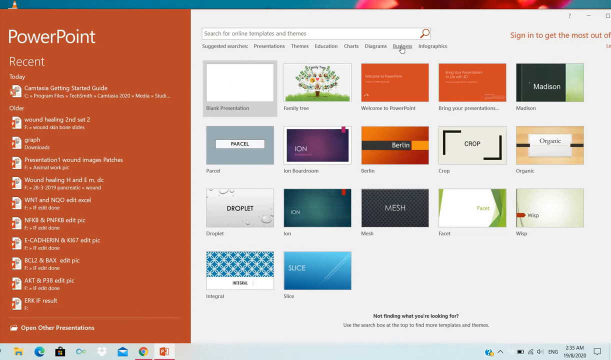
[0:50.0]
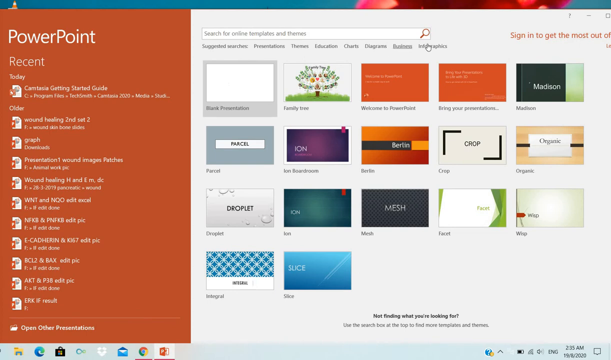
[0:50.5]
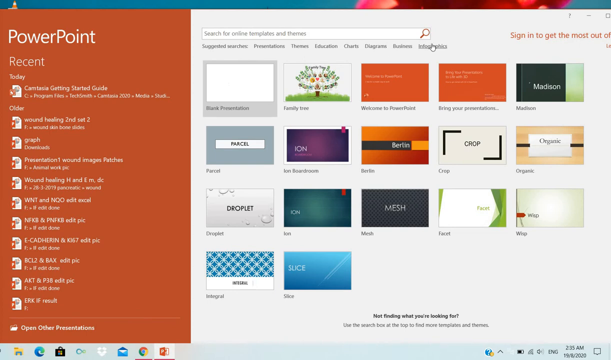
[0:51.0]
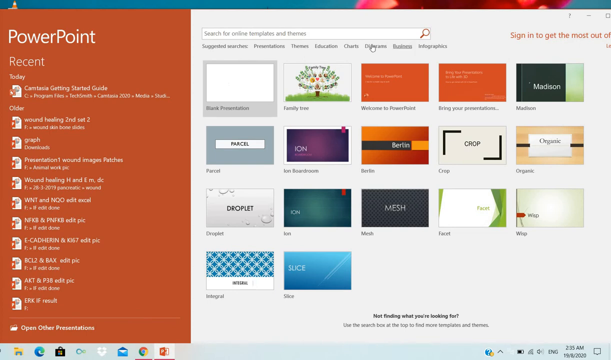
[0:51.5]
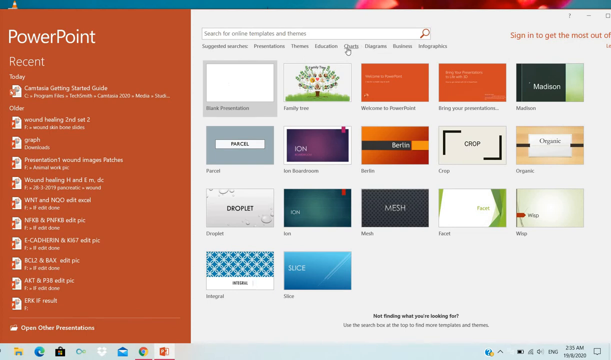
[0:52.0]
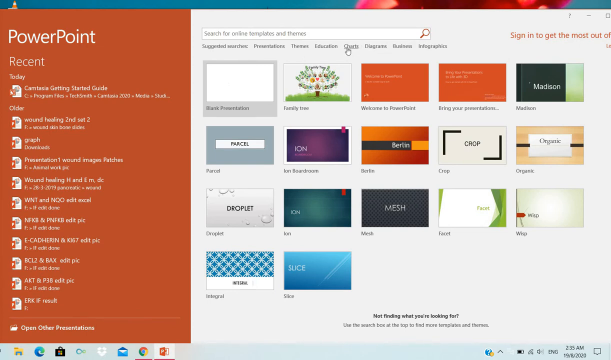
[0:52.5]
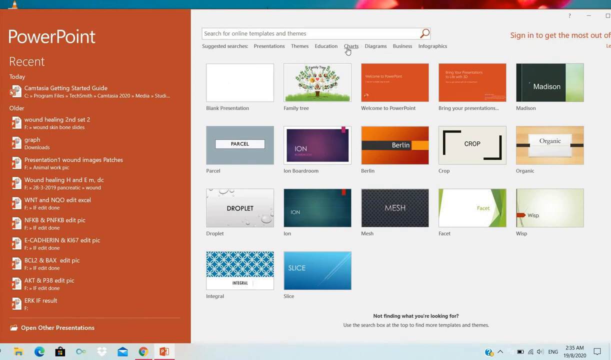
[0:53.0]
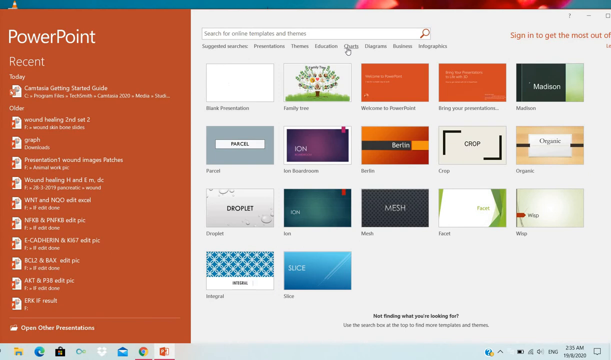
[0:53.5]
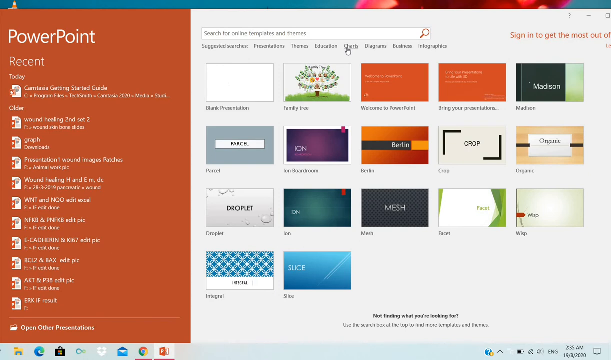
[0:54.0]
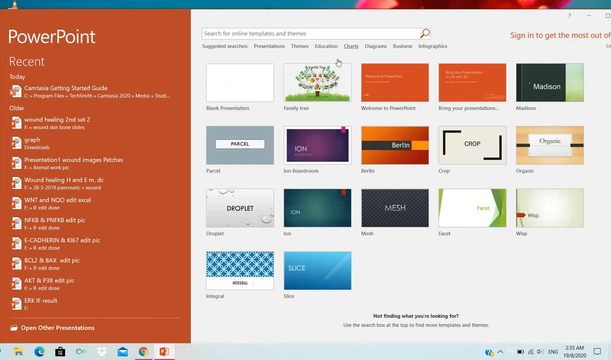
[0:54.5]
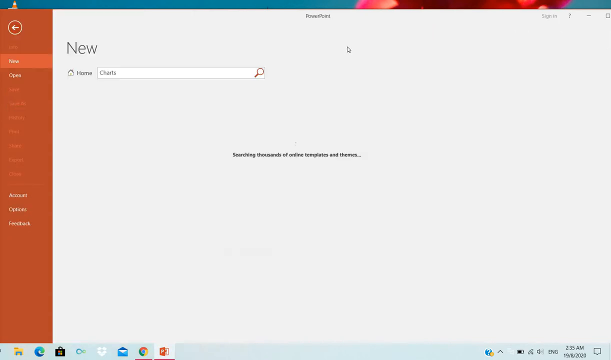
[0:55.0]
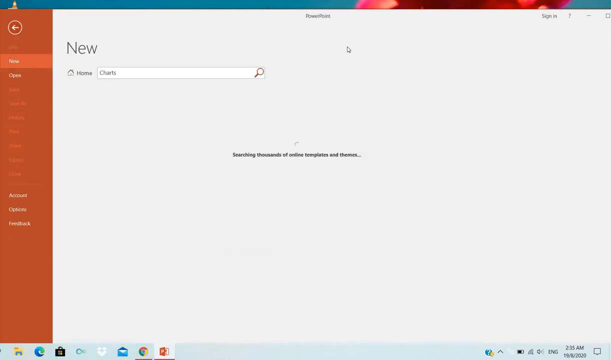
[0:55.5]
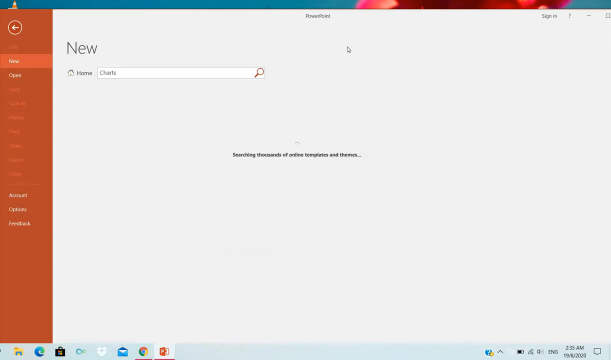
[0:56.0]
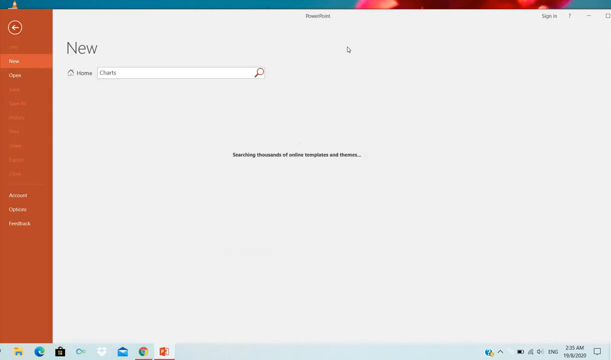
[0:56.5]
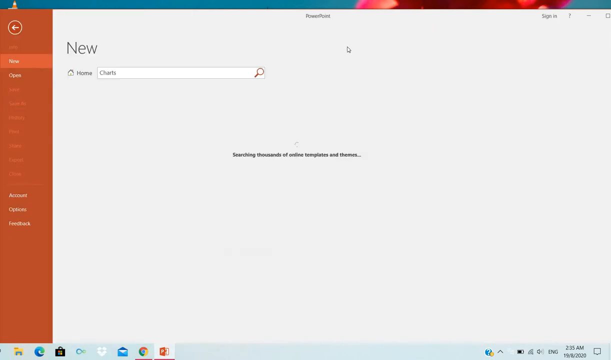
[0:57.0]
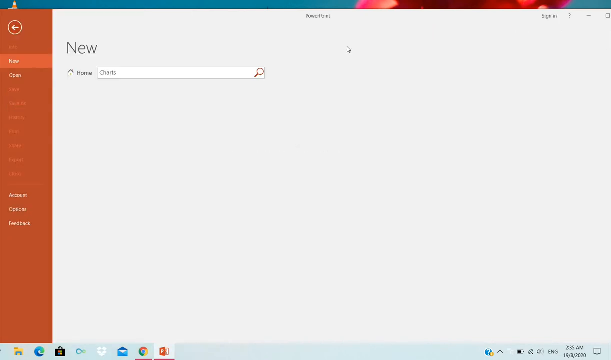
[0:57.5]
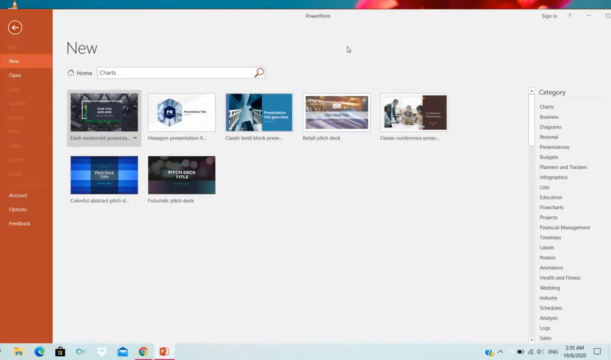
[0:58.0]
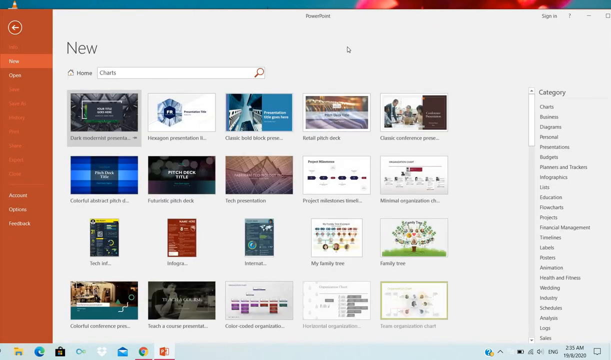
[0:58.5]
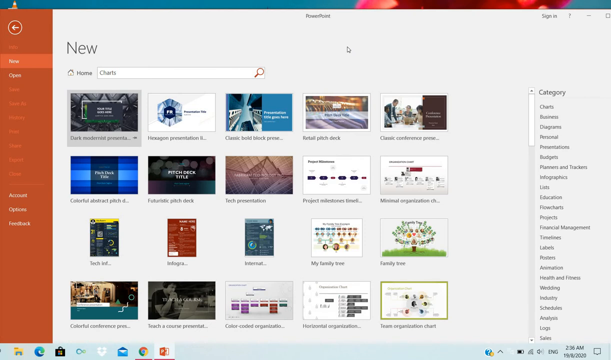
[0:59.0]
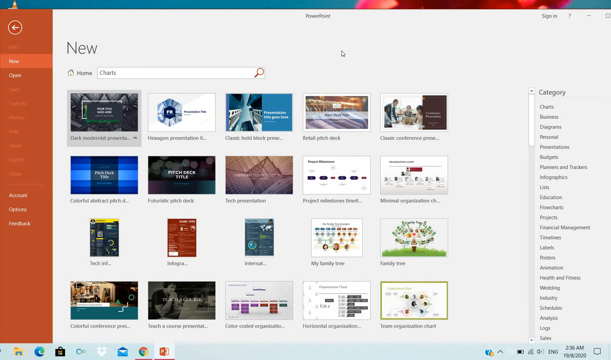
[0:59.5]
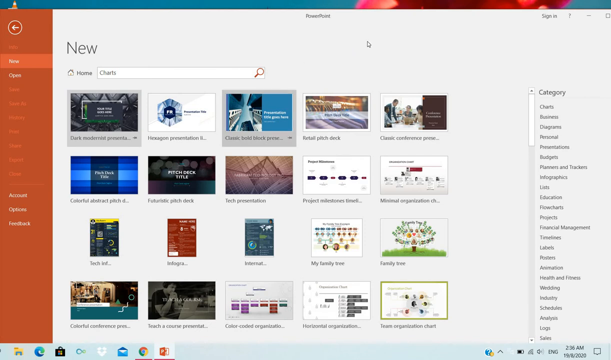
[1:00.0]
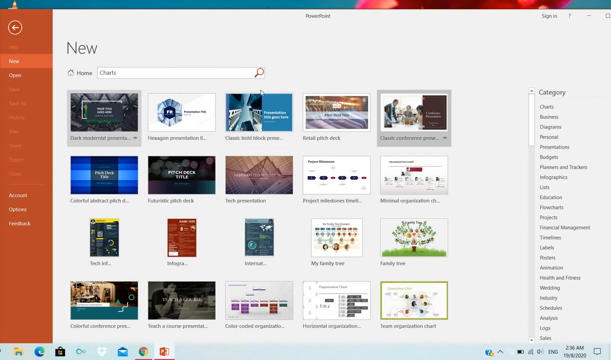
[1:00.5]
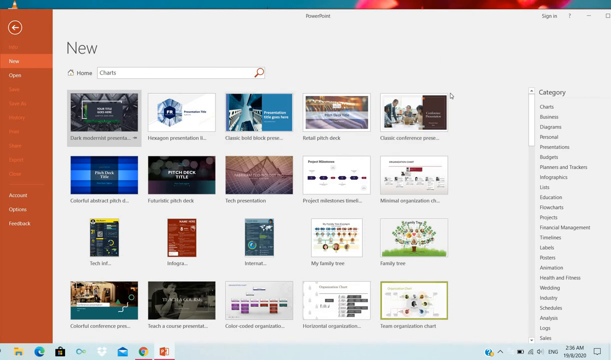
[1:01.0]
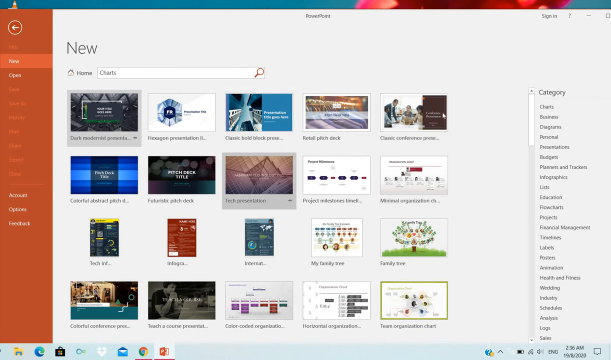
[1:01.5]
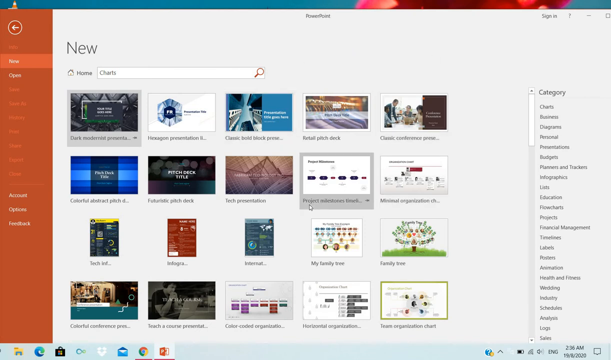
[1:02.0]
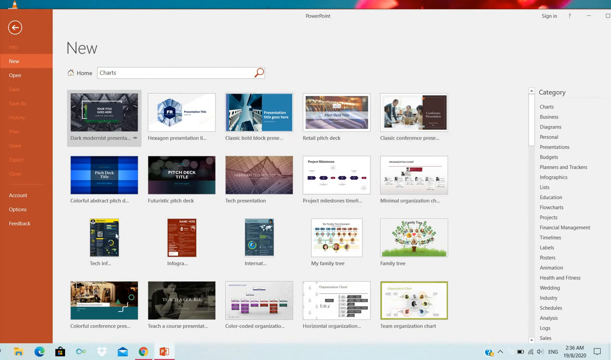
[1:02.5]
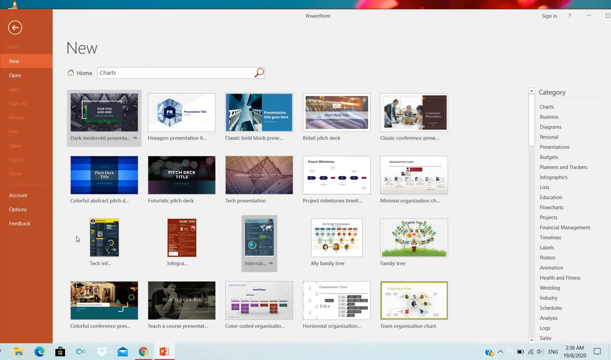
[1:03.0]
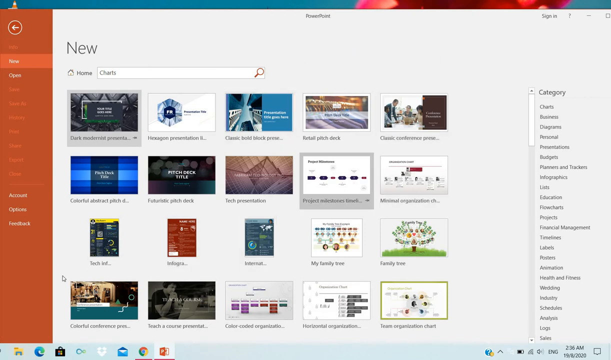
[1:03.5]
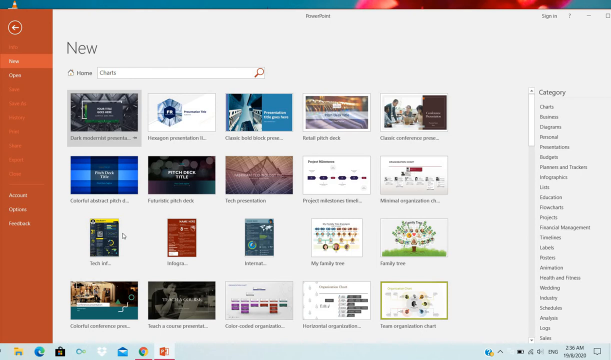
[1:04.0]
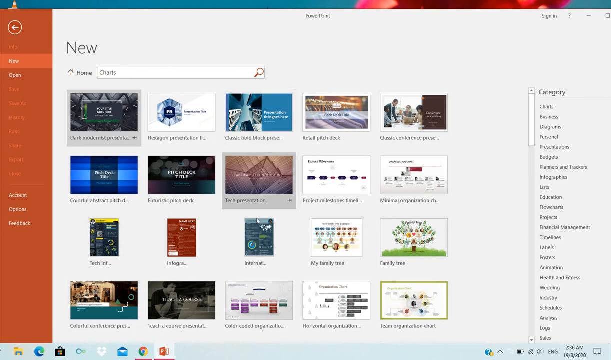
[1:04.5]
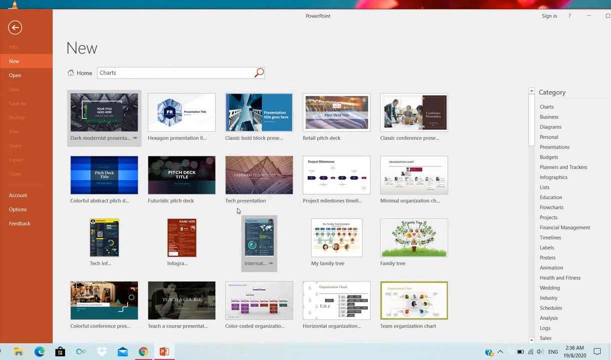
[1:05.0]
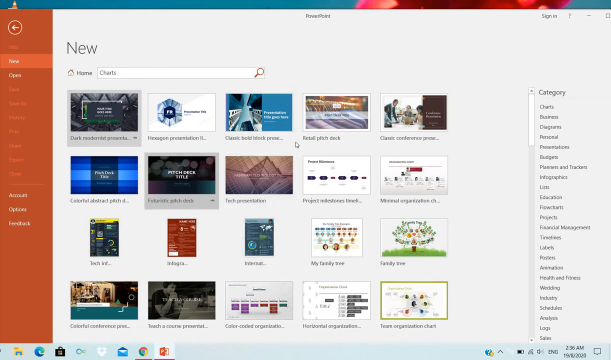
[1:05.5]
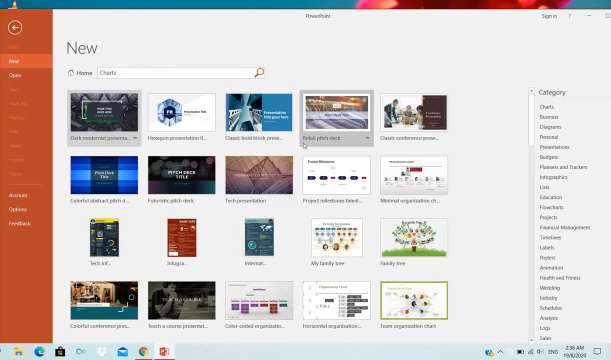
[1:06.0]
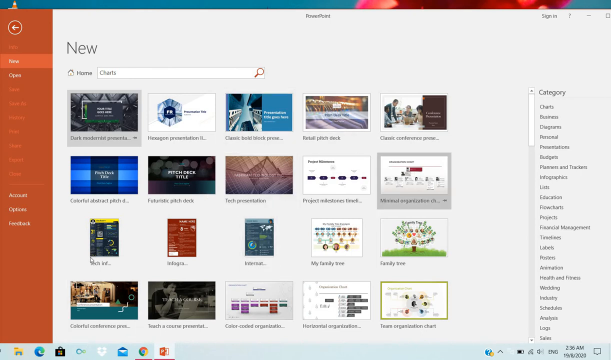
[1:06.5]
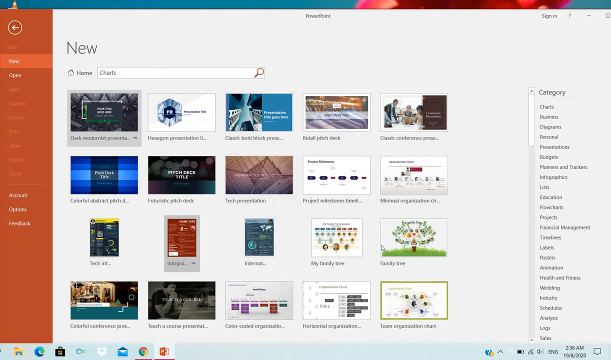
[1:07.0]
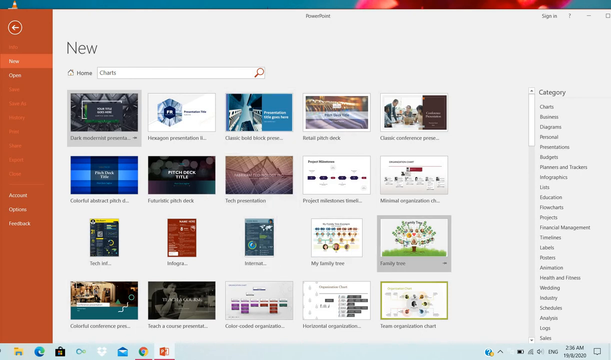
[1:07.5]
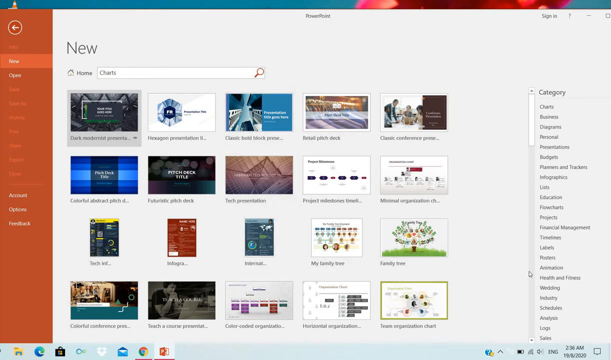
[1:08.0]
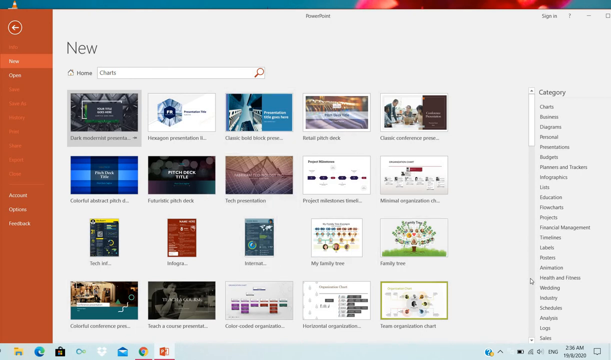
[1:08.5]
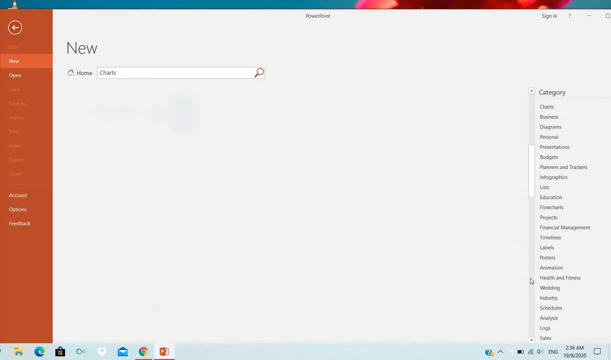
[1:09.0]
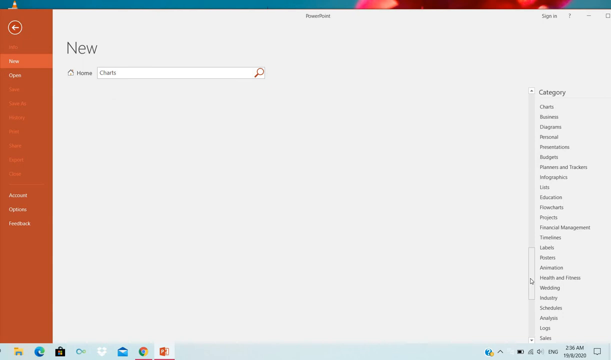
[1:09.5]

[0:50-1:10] The pointer moves across the suggested searches: presentations, themes, education, charts, and further words that are hard to read because the lettering in the video is slightly blurry. The person moves all the way to the right of the suggested template categories and then back to charts, and appears to click on charts. New chart templates appear, and the mouse bounces around erratically and jerkily over the options, highlighting different templates but never selecting one. The pointer then goes to the far right, where the word "category" appears in slightly larger dark gray font at the top of a list of chart categories. Just to the left of the list is a white toggle that can be pulled down to go through the categories; the person moves the pointer to the bottom of the toggle stripe and clicks, and the toggle shoots all the way to the bottom.